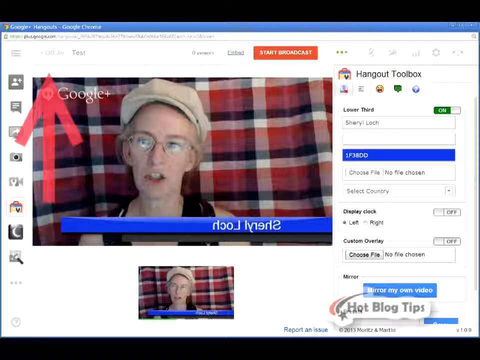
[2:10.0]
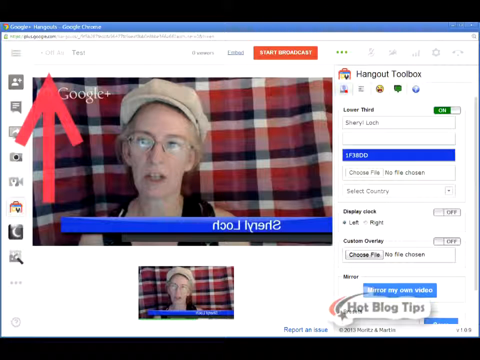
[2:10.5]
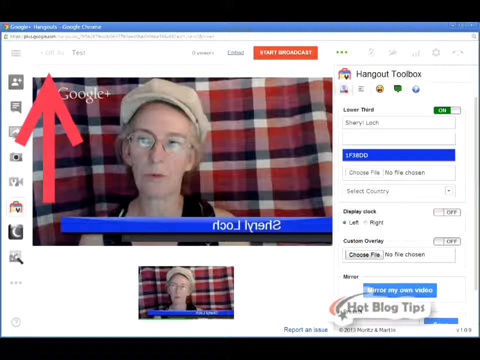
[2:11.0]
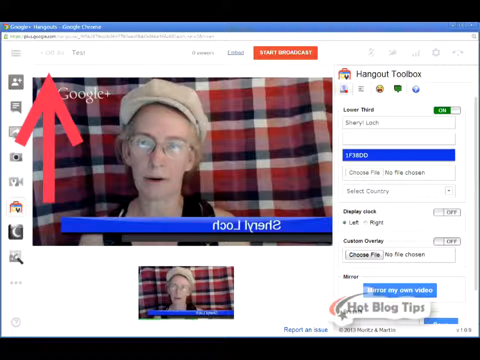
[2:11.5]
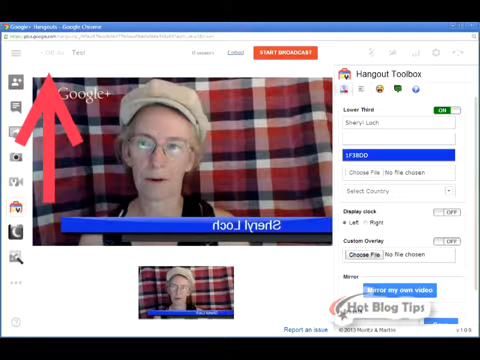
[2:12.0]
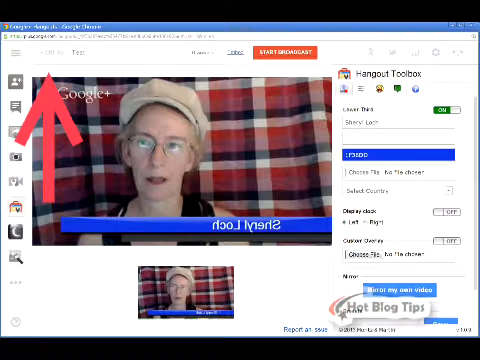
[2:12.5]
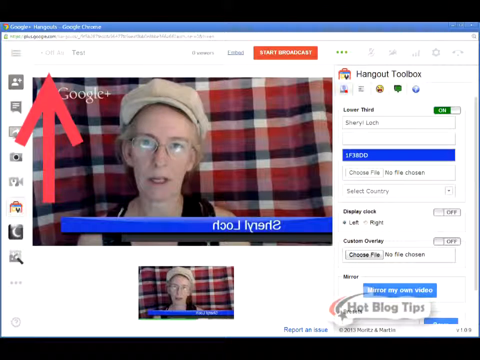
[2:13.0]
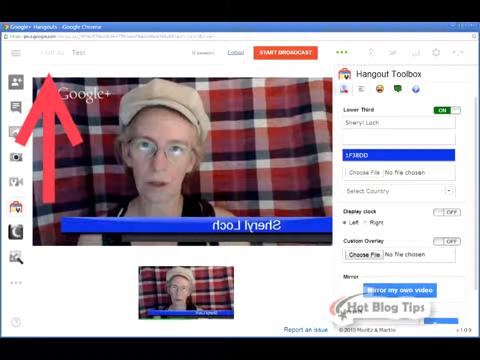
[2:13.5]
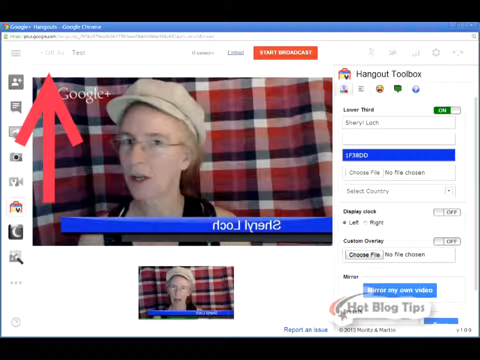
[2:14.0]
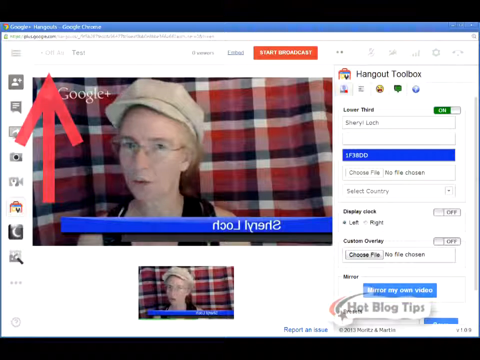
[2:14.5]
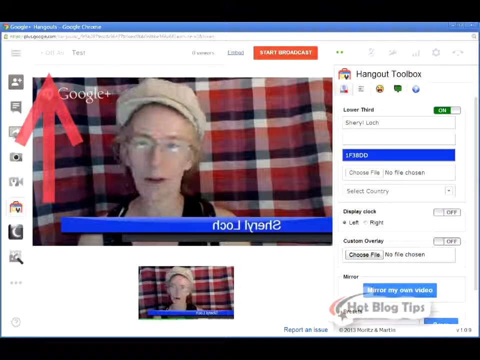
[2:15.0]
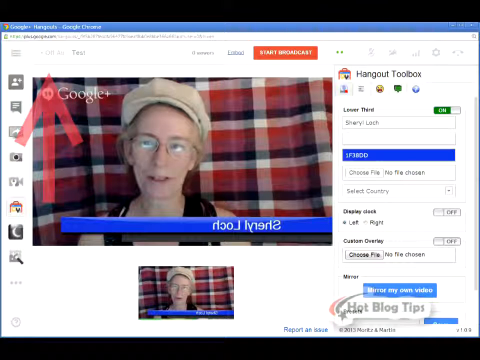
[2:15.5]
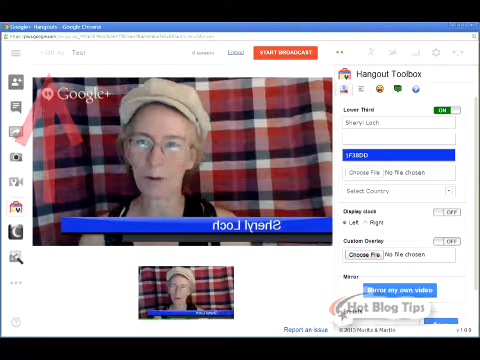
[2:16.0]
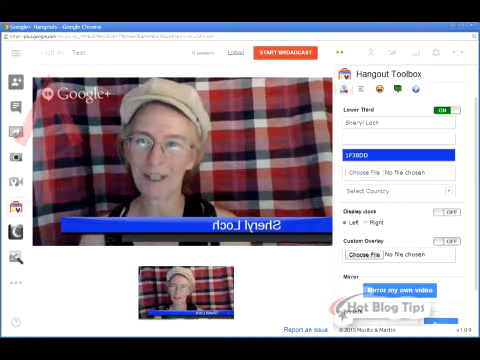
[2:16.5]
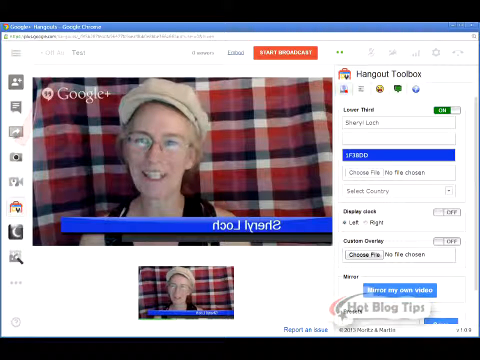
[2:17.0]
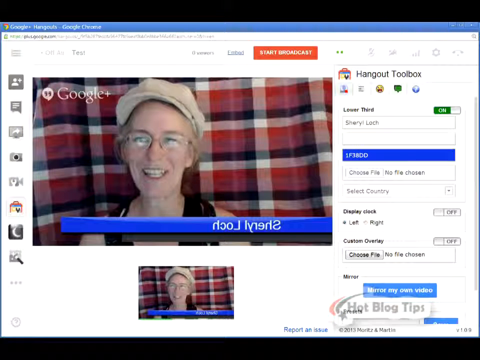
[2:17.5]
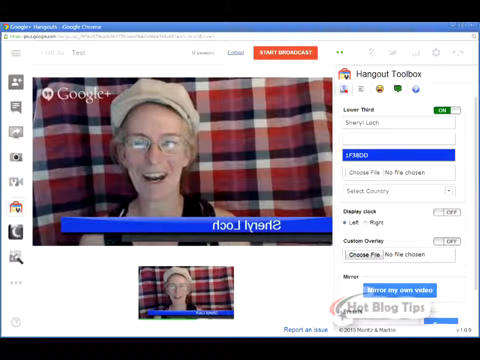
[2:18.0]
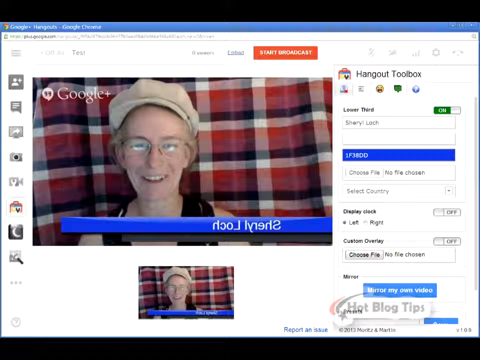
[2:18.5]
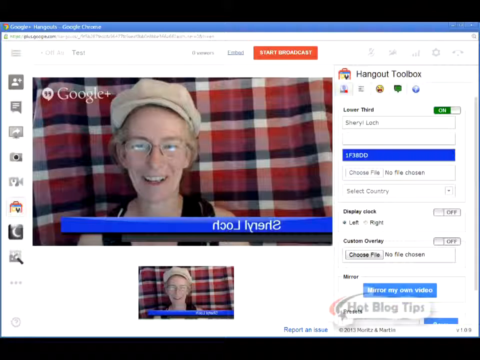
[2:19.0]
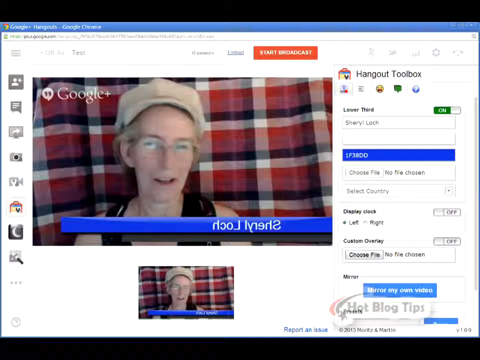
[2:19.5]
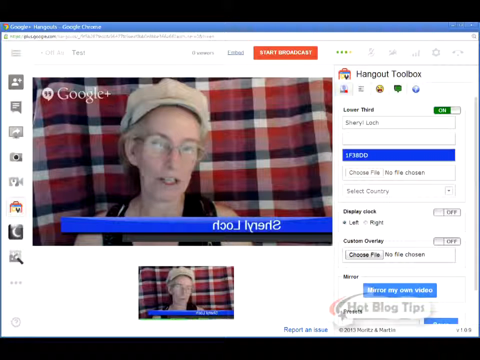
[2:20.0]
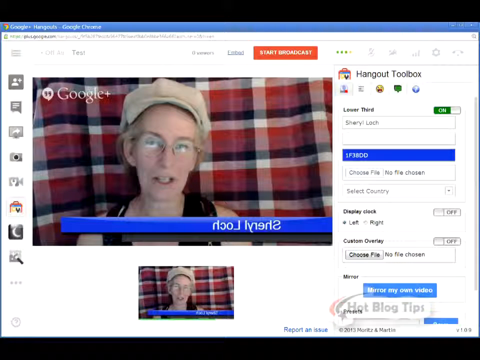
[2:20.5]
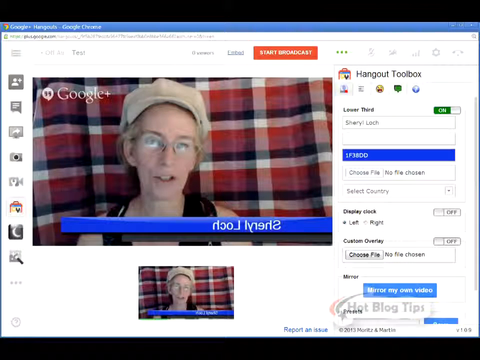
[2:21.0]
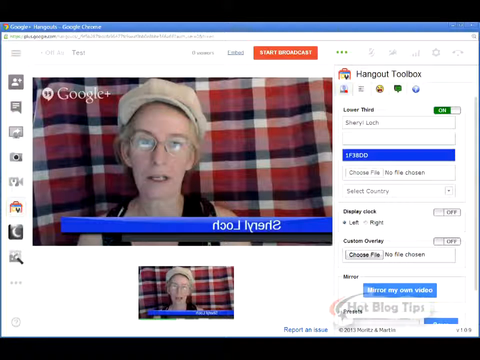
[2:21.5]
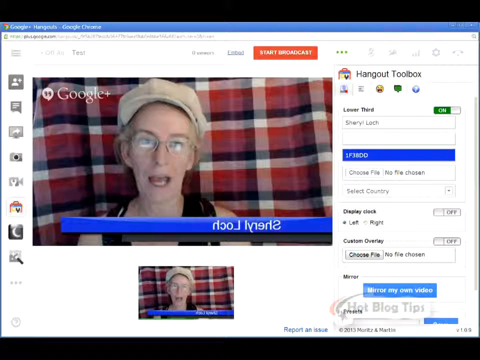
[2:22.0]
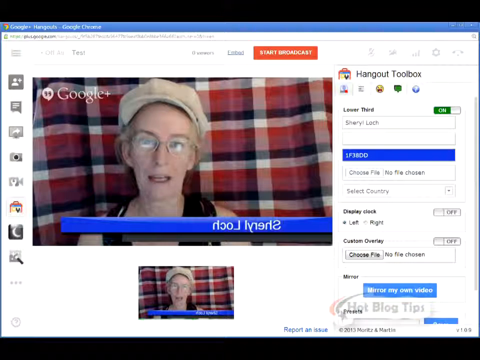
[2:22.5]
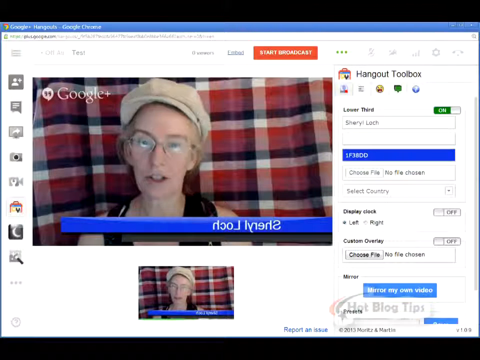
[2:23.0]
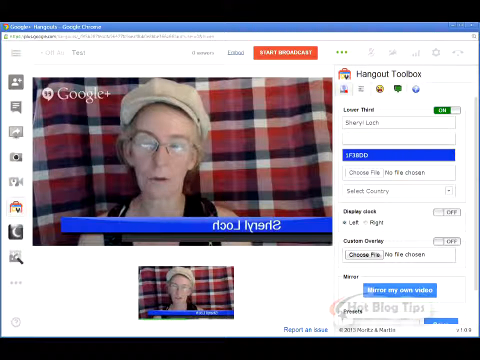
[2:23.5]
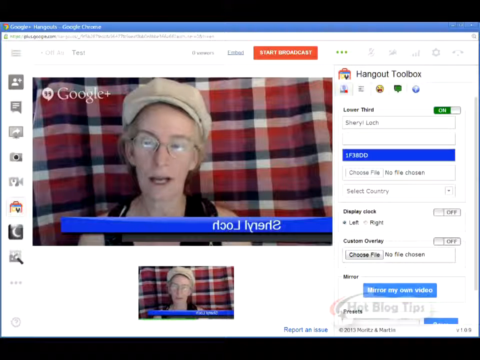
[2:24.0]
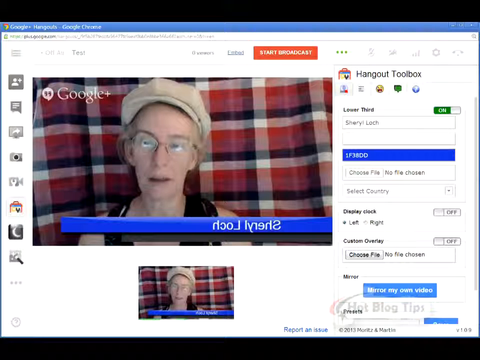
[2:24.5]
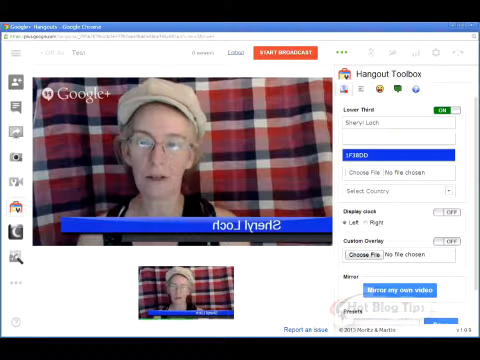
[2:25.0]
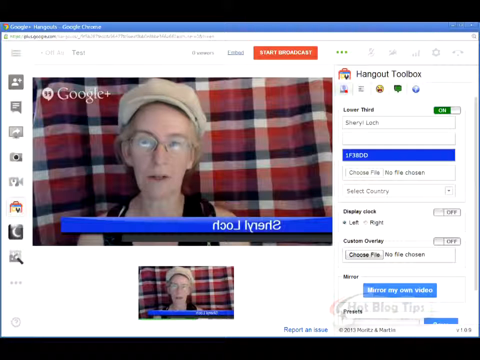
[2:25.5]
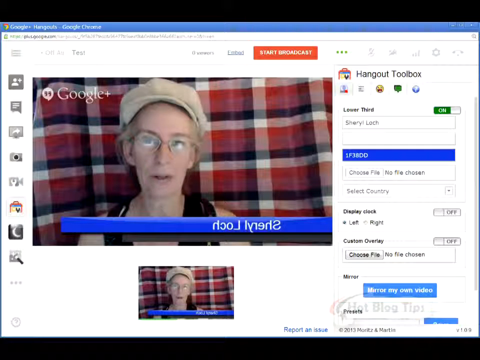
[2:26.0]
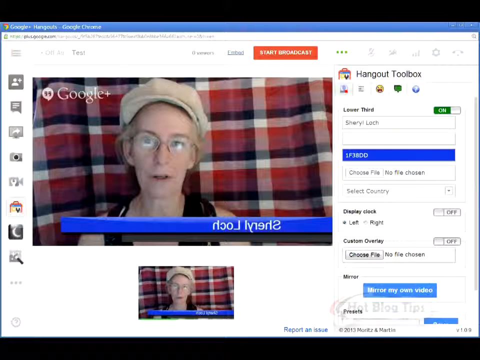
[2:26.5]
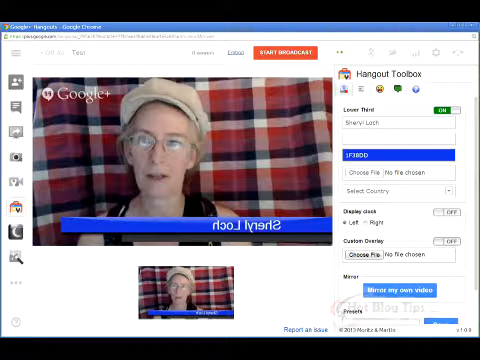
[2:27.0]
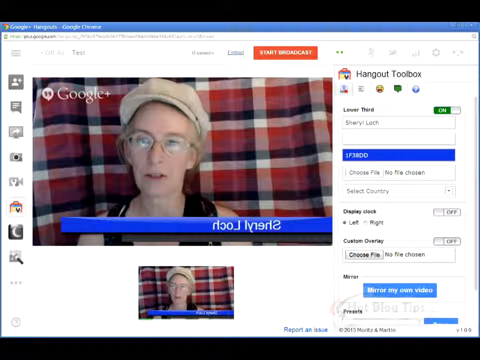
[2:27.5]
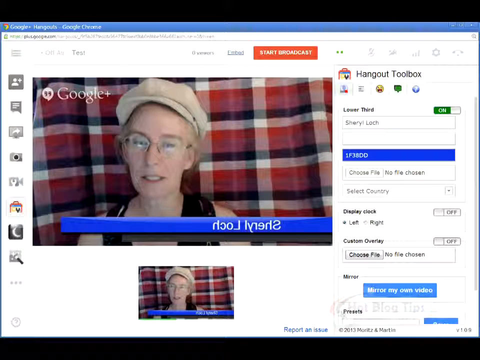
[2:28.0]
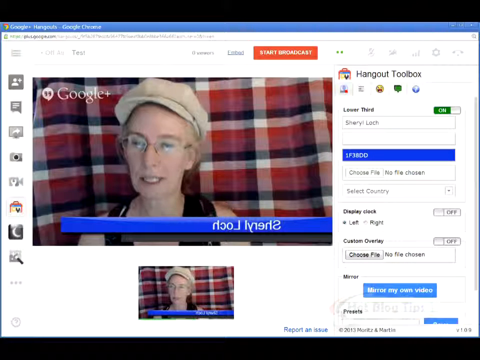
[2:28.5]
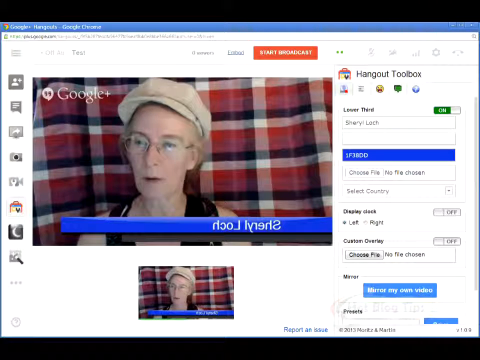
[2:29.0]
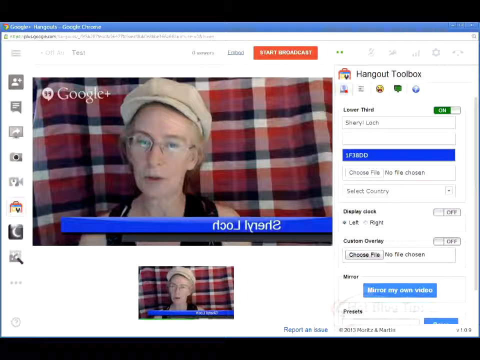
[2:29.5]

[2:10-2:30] A video shows the user wearing a hat, glasses and a black vest against a red background, the same as in her avatar, which is just below the video. On the right is a panel labeled "Hangout toolbox" with many functions or features, unreadable because of the poor video quality; only "custom overlay" at the bottom, with a choose-file function, can be made out. At the bottom of the panel on the right is a logo reading "Hot Blog Tips" with a shooting star on the left. A red arrow on the left of the video points upward at something that cannot be read. At the bottom of the user's video, her name appears on a blue banner that looks kind of like a mirrored image.